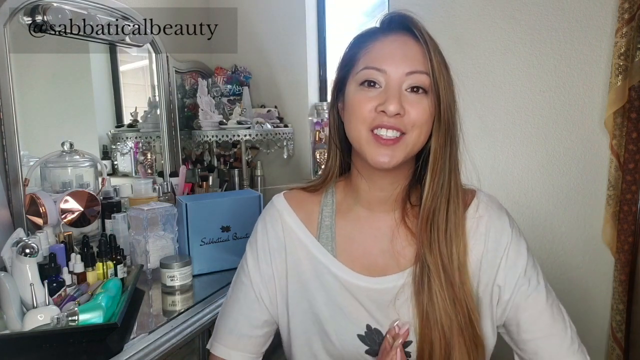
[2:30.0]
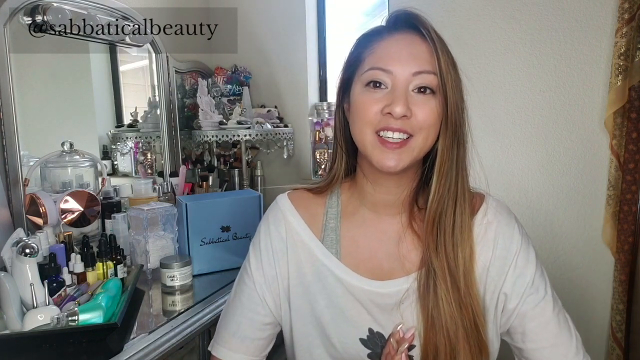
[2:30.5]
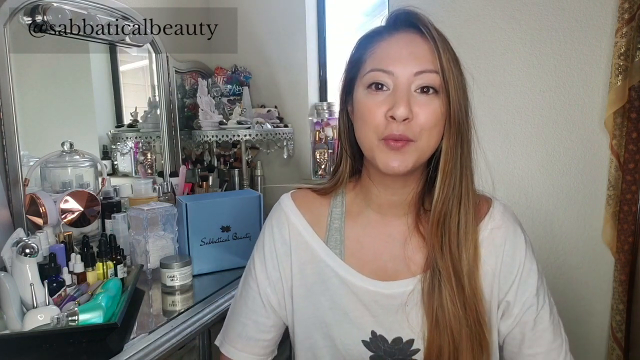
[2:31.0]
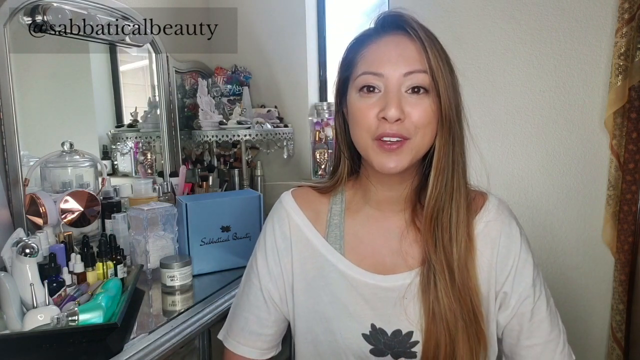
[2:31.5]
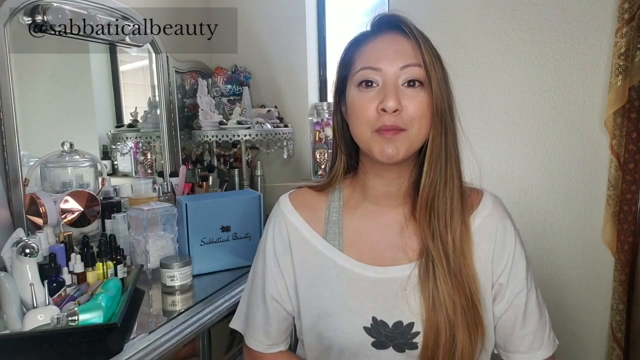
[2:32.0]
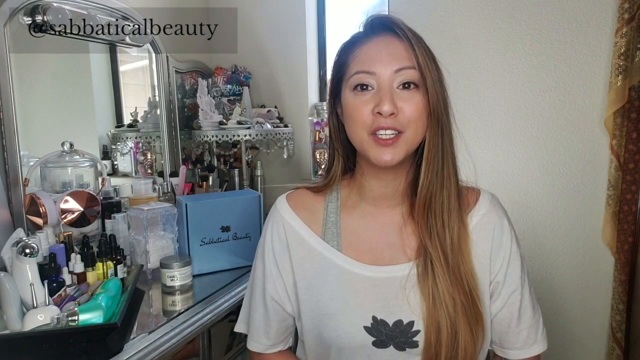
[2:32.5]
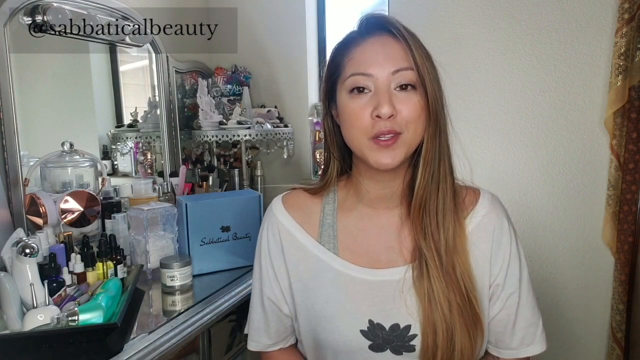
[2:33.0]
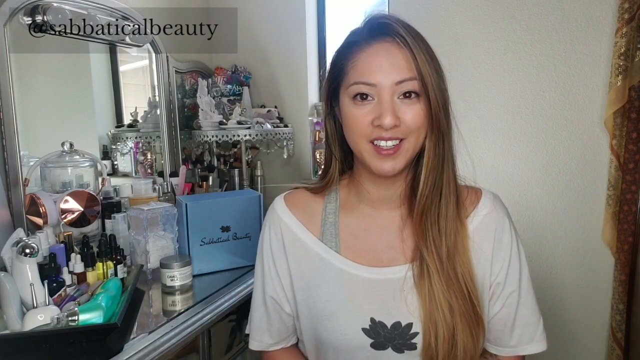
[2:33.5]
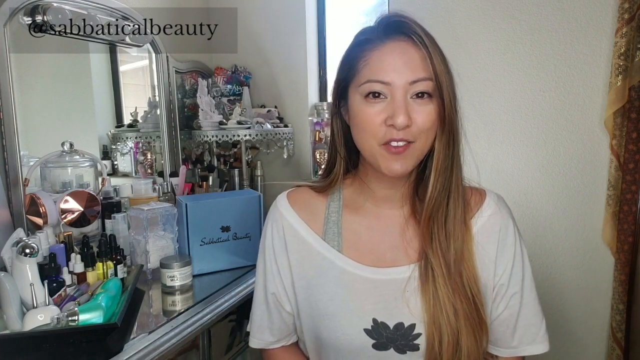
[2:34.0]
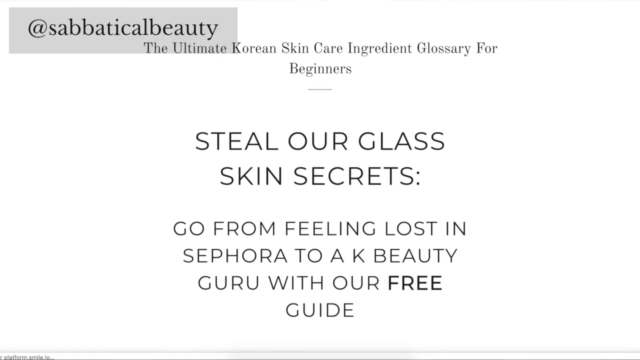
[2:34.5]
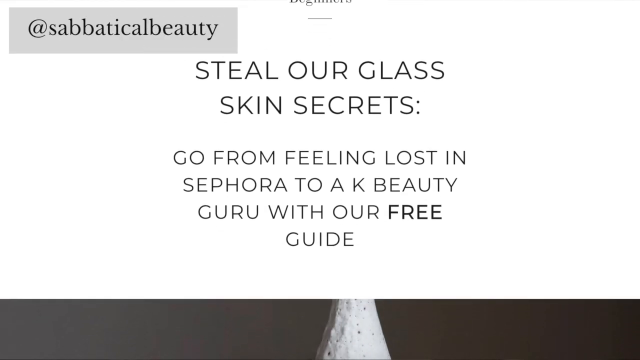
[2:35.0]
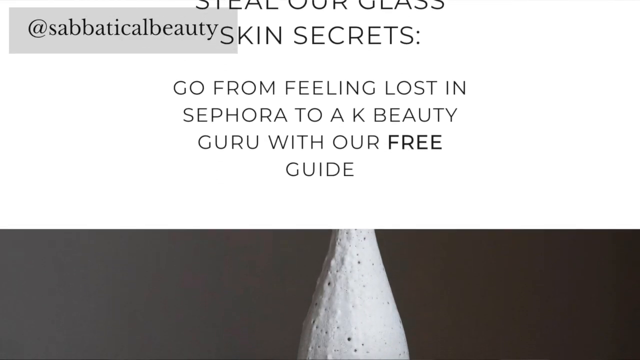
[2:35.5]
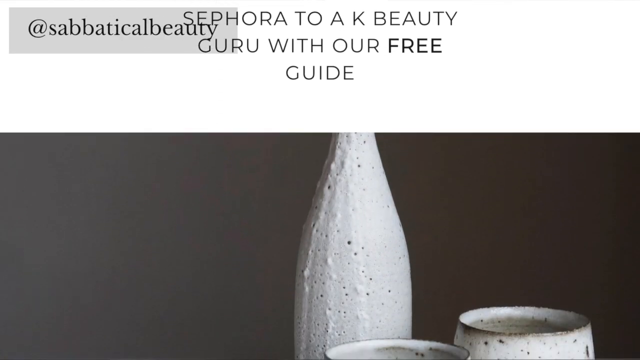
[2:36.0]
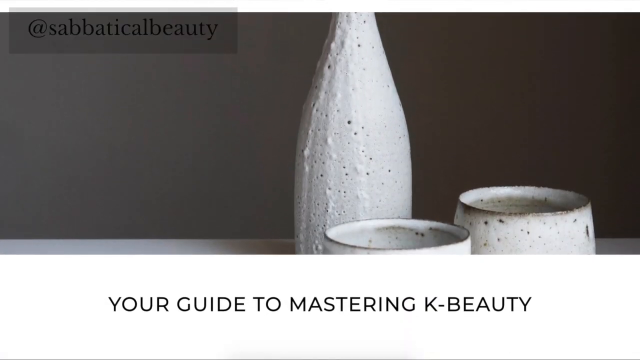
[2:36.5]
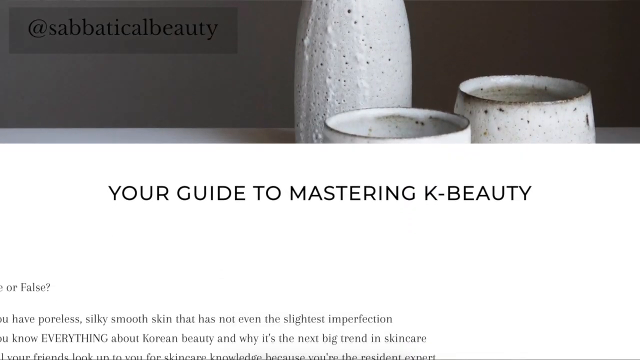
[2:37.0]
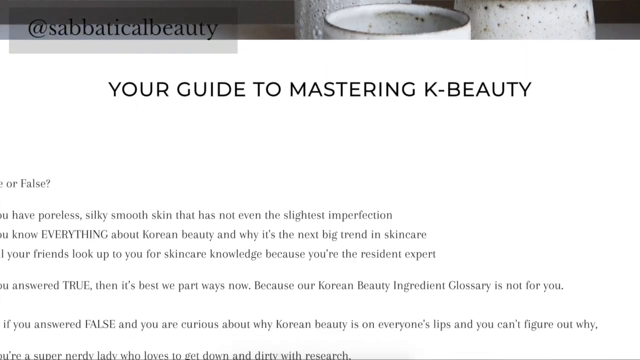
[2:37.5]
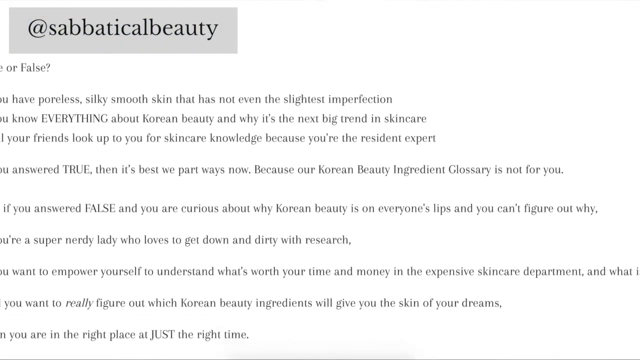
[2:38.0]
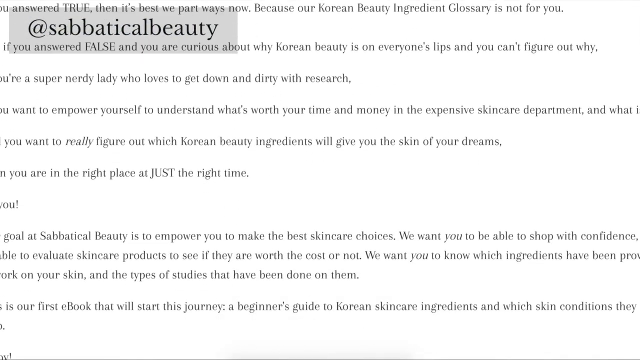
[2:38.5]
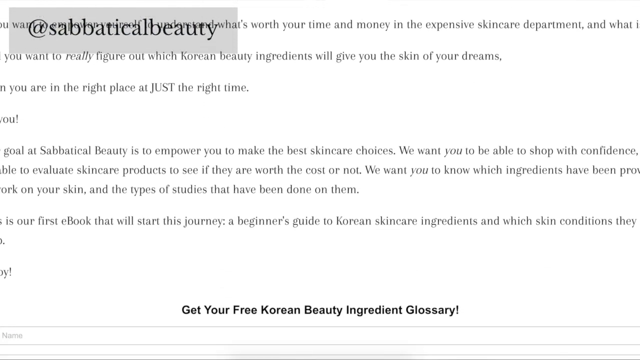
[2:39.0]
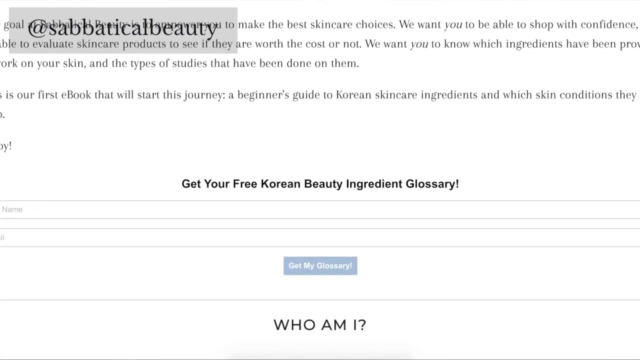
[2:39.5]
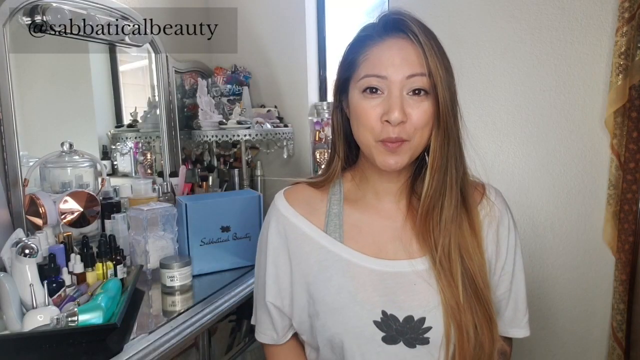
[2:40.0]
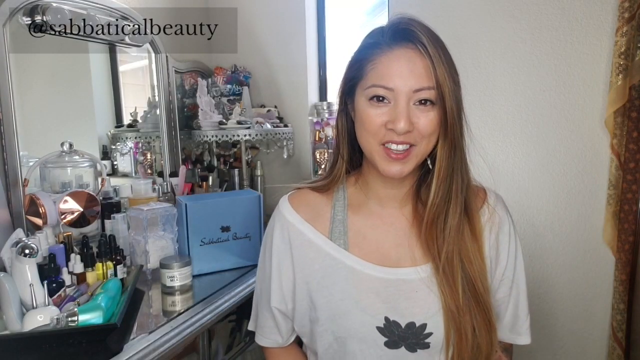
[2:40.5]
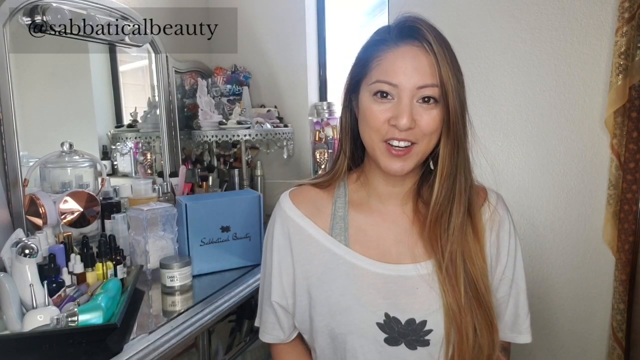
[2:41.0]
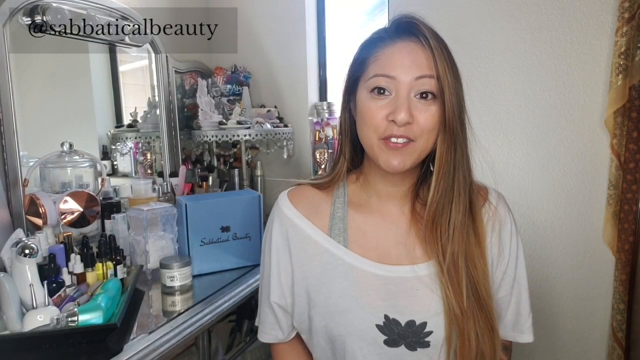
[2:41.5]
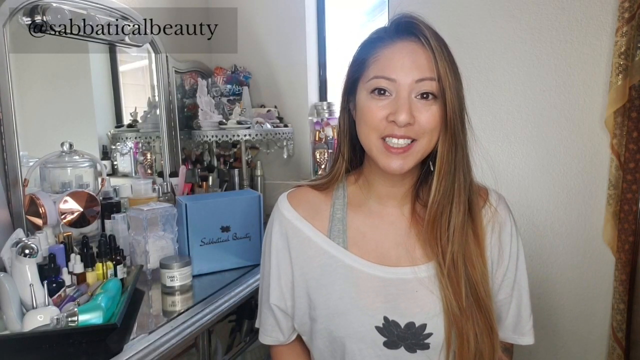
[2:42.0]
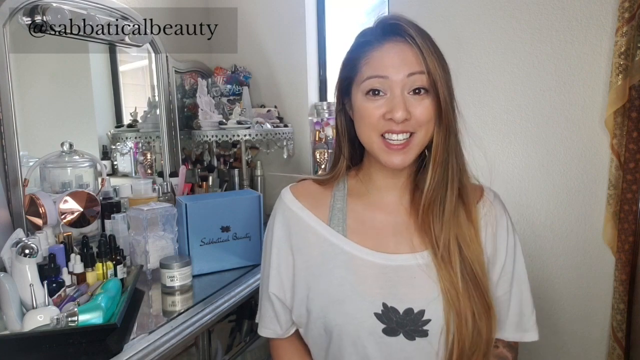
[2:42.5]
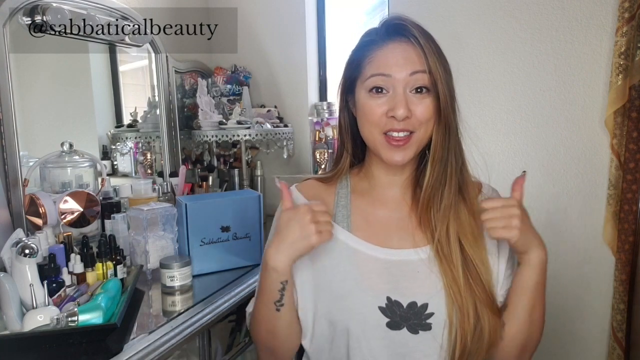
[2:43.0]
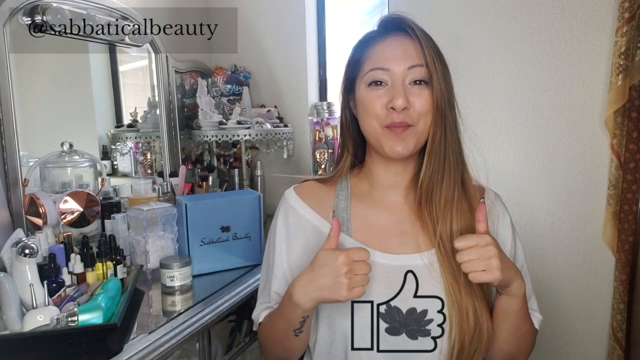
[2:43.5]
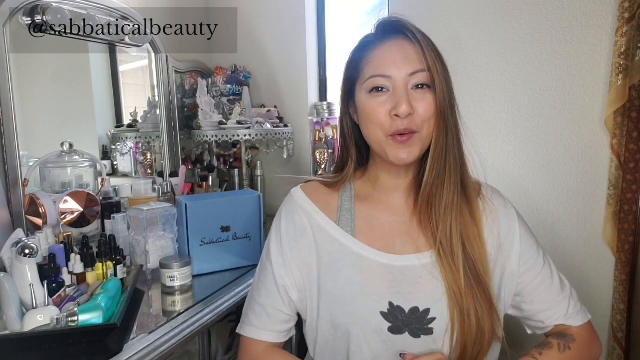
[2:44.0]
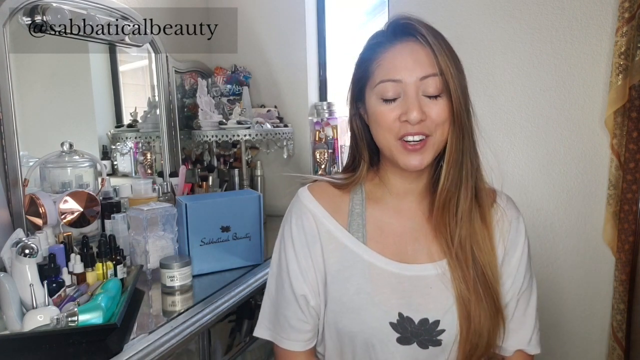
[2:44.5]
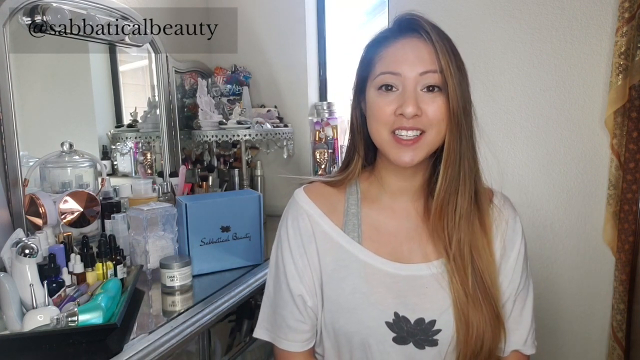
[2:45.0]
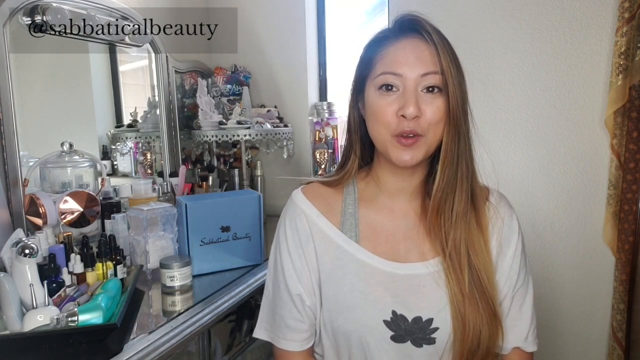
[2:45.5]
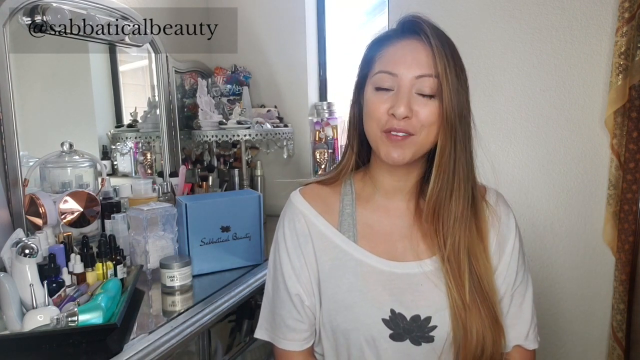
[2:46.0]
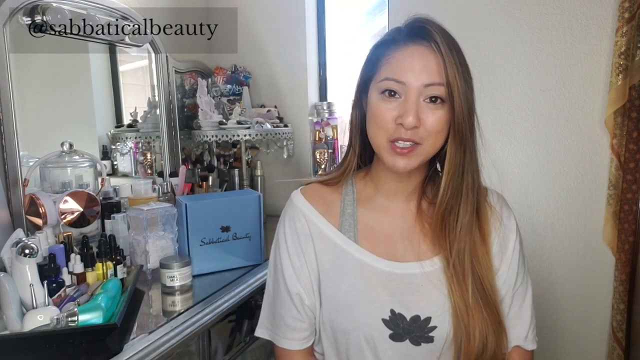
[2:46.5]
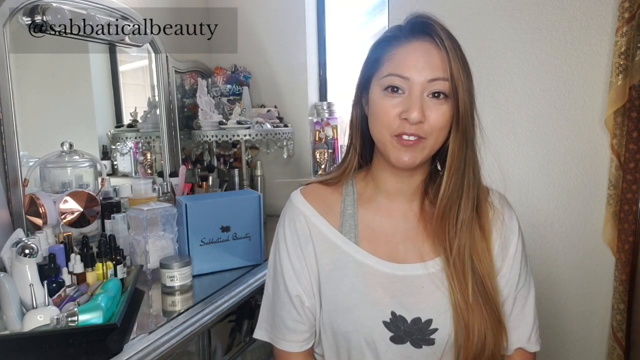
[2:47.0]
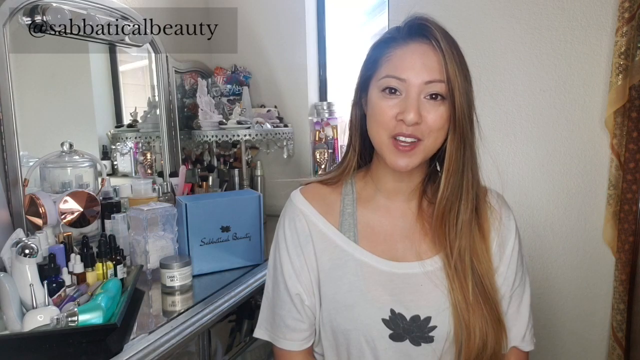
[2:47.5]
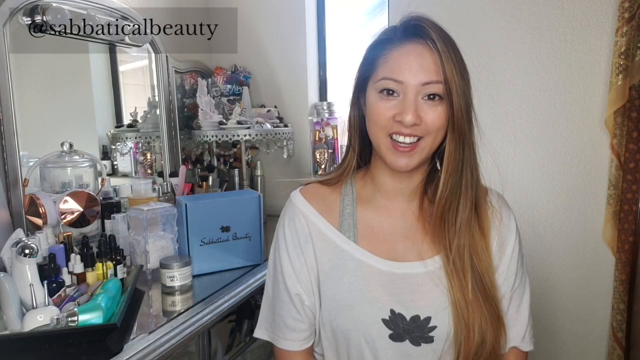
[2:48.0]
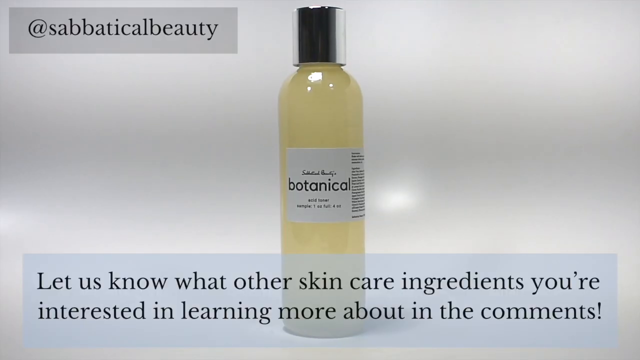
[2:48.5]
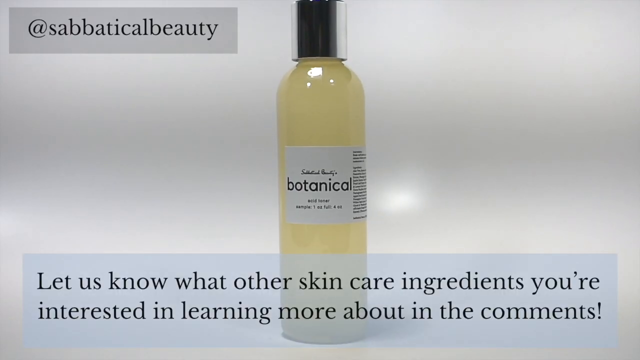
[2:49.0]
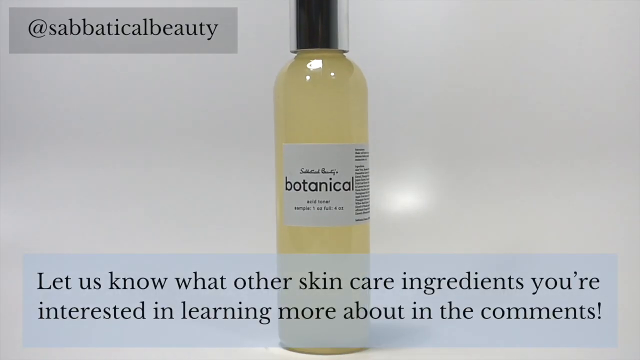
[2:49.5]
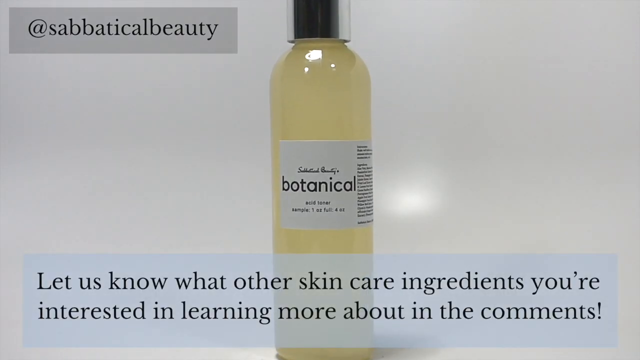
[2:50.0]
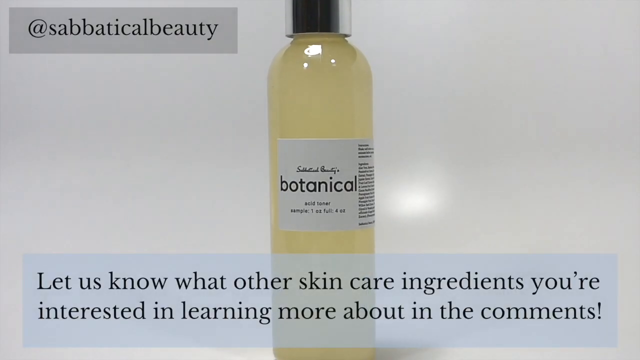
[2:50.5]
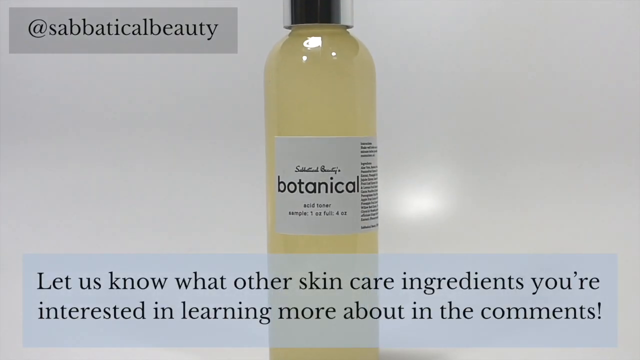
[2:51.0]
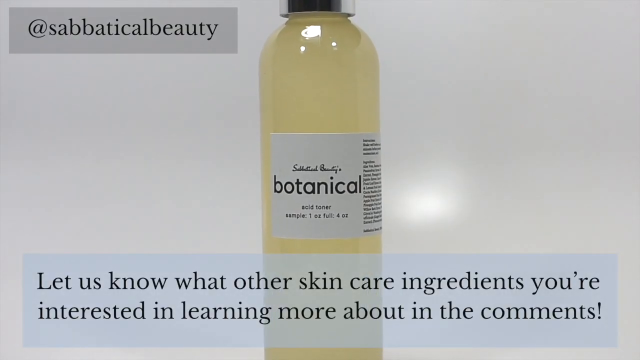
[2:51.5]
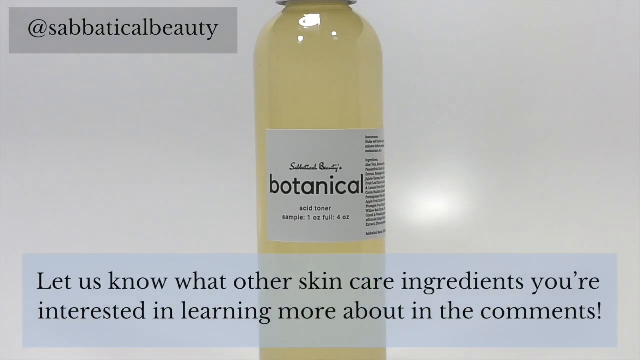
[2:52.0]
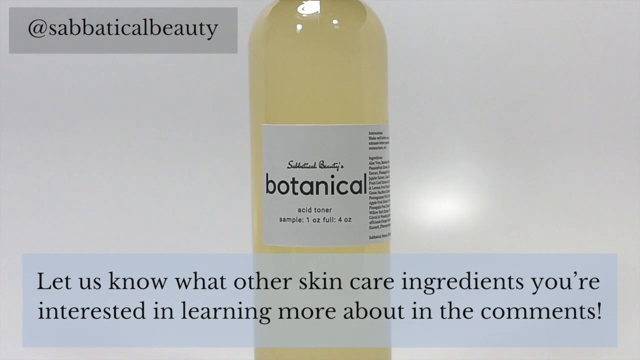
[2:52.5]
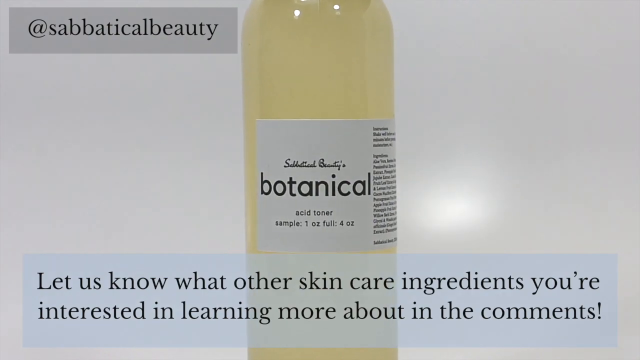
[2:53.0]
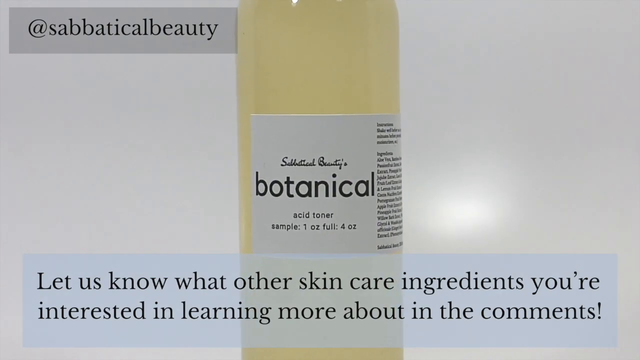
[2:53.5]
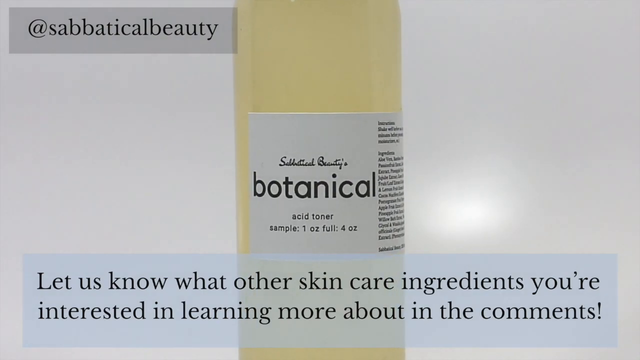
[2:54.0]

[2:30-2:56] Other products the company sells are shown.